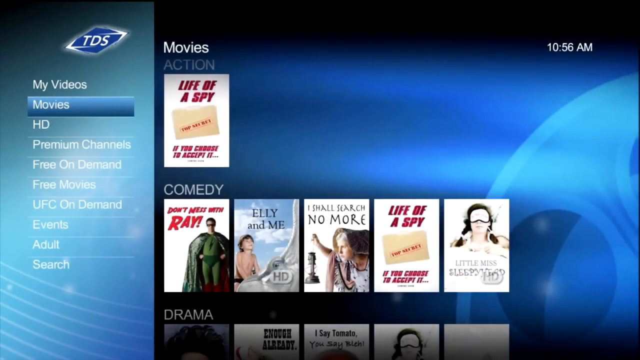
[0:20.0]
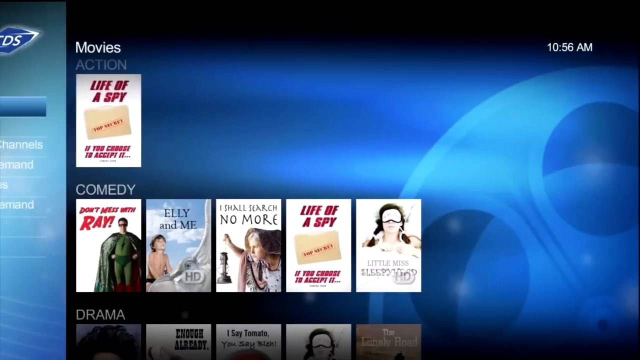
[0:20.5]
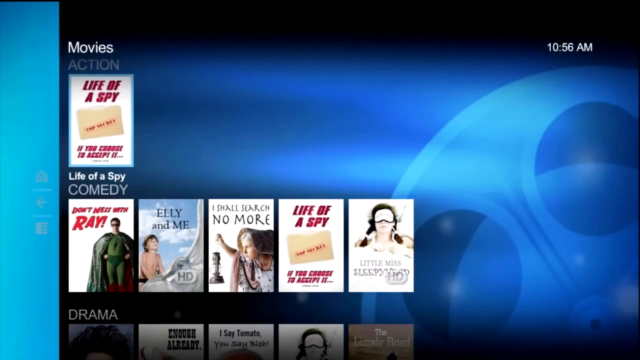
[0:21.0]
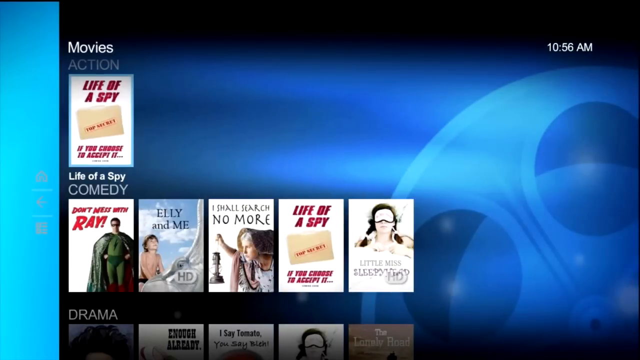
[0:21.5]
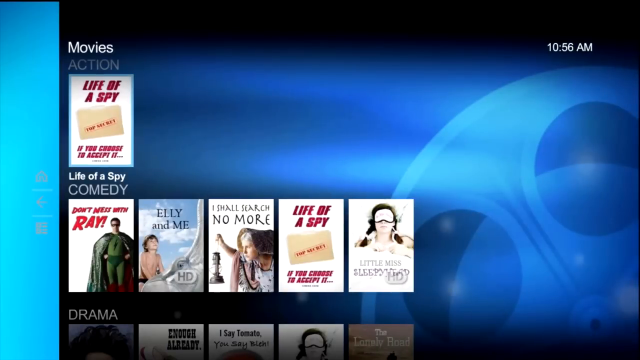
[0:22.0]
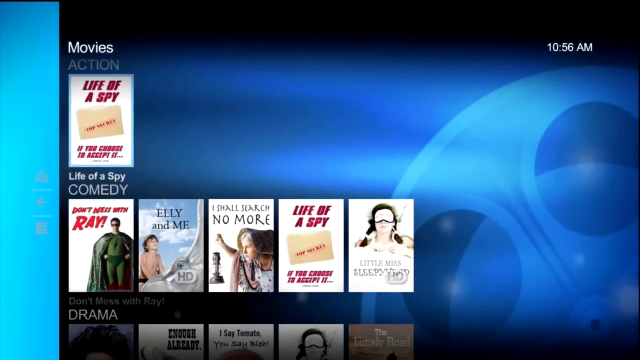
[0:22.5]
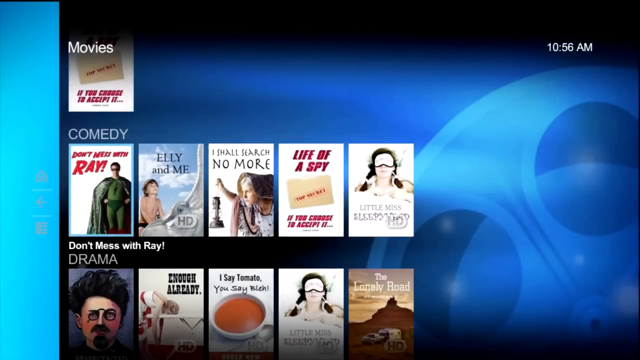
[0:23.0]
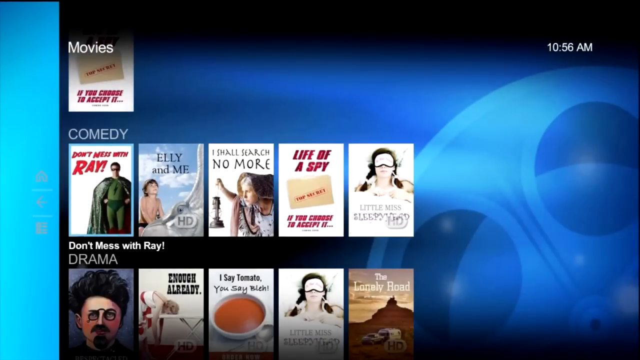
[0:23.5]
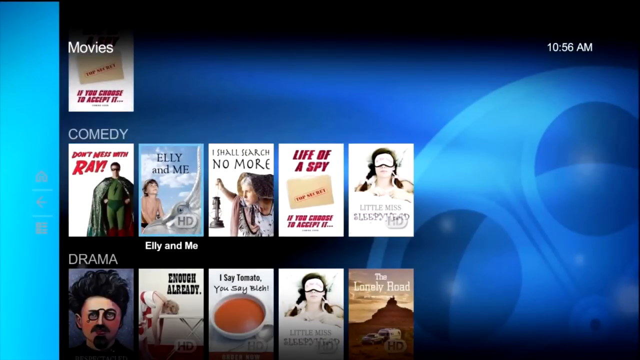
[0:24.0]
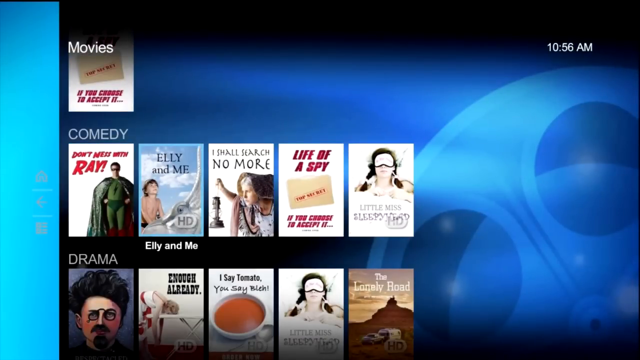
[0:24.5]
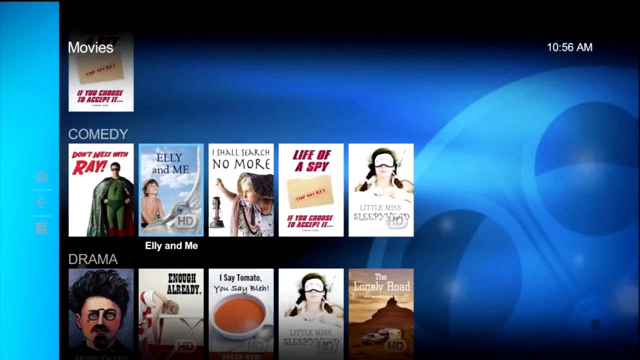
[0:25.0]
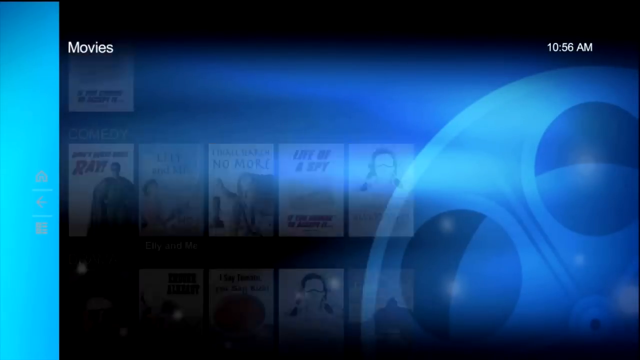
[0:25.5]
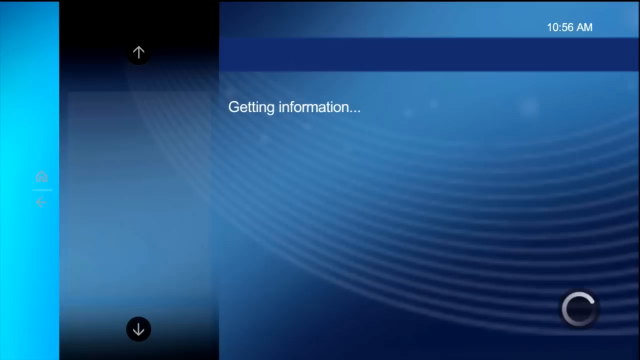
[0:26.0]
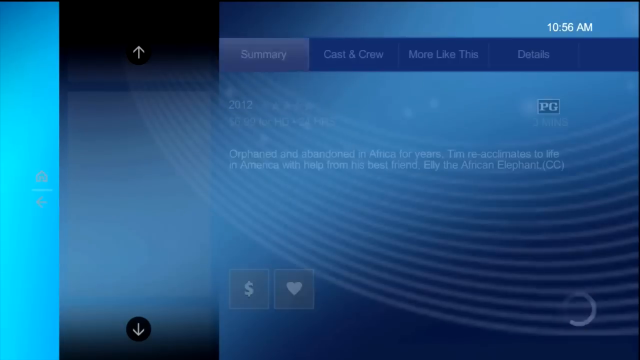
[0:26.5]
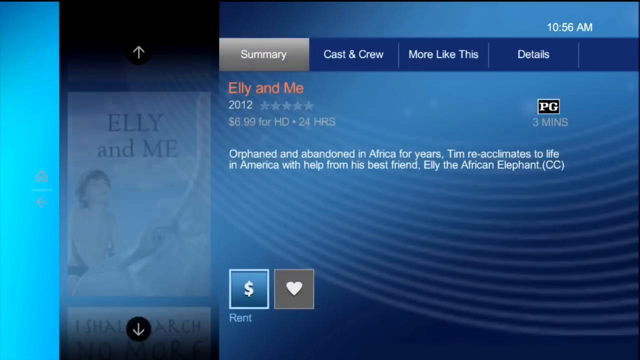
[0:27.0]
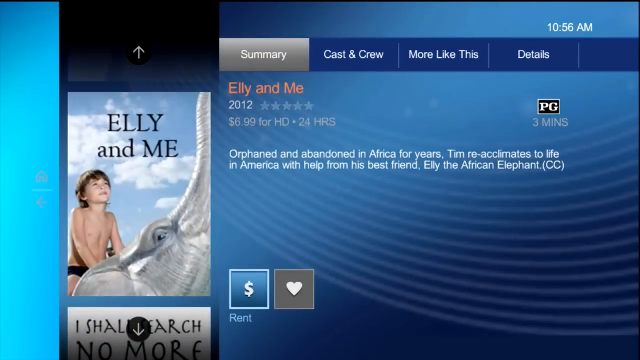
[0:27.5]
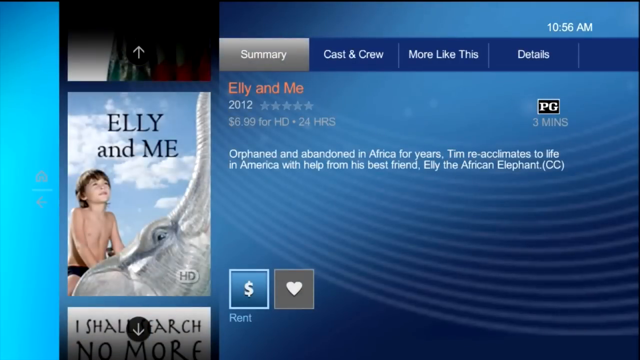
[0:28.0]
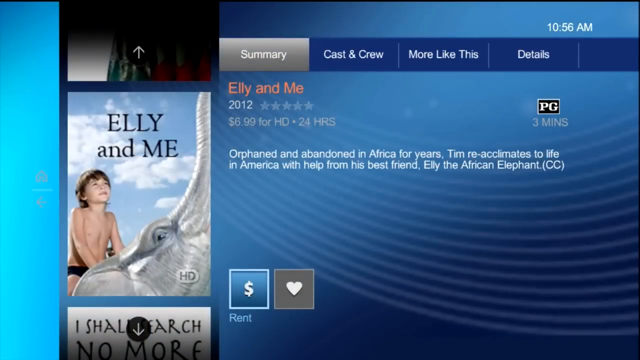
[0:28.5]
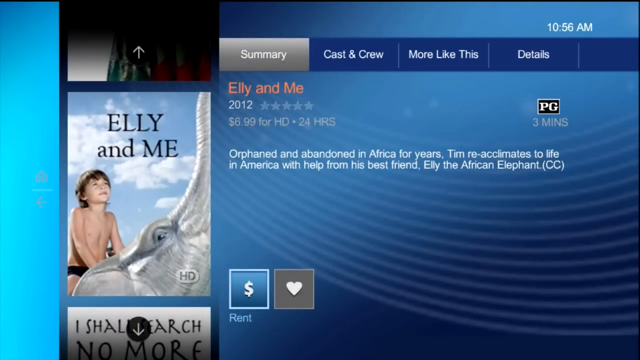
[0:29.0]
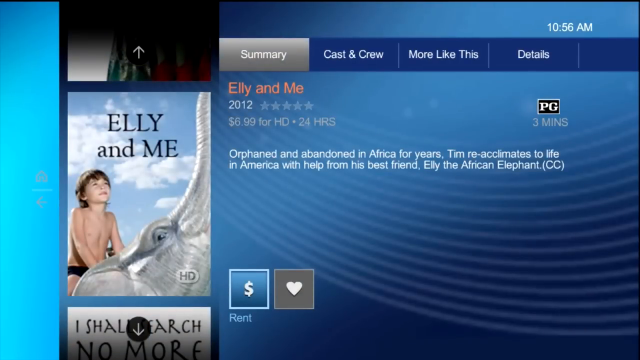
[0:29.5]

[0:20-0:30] The same movie streaming application is on screen. On the left-hand side, in a vertical box, are the categories "my videos", "movies", "HD", "premium channels", "free on demand", "free movies", "UFC on demand", "events", "adult" and "search", with the movies category highlighted by a blue rectangle. On the right-hand side, at the top middle, is the word "movies". Below it is the subcategory "action" with one movie listed, Life of a Spy, and beneath that are five comedy movies and five drama movies. The user moves to the right, and the categories in the left box disappear. They drop down into the comedy section and select the second option, ELLY and Me. Information then appears on the right, including the year it was made, the number of stars it received and the cost of the HD version.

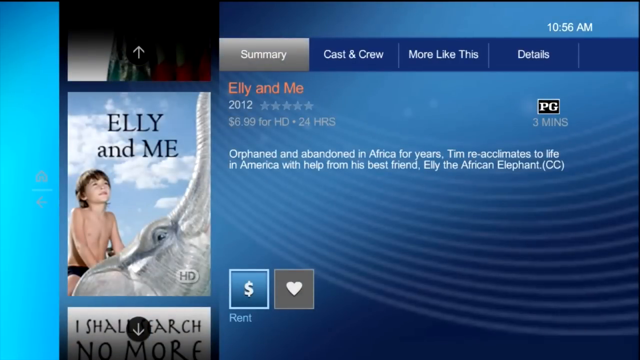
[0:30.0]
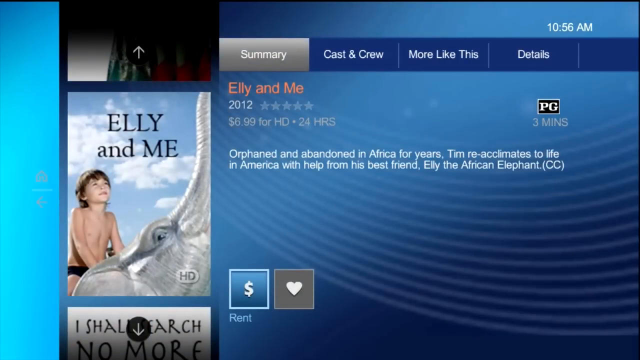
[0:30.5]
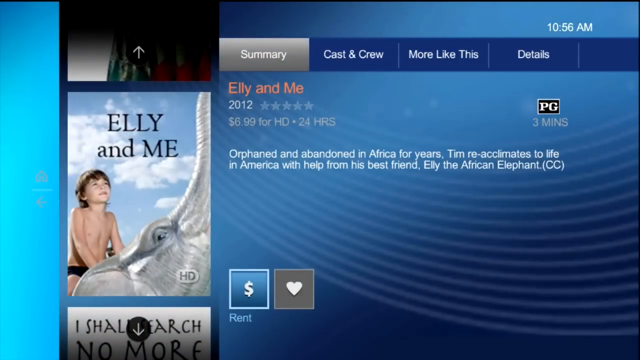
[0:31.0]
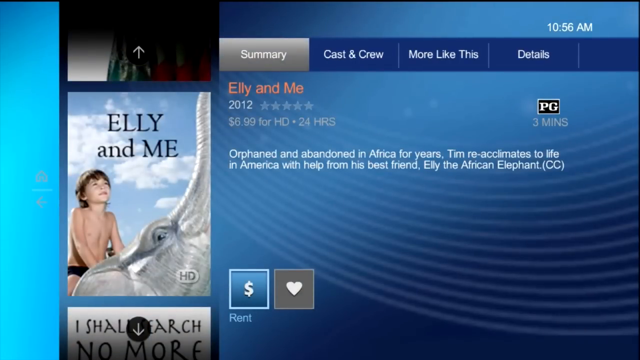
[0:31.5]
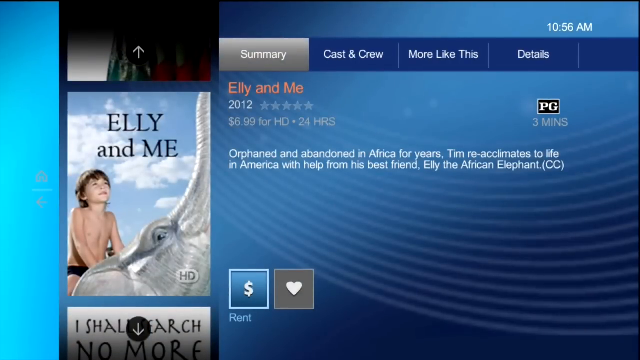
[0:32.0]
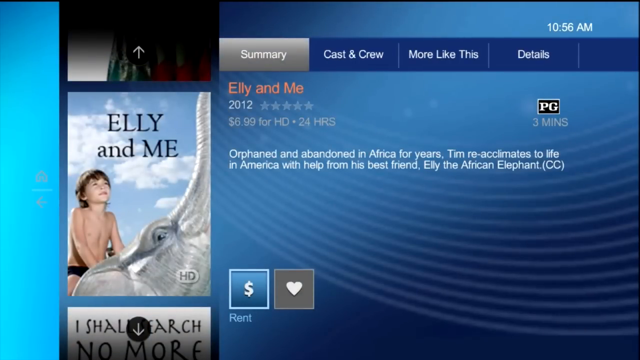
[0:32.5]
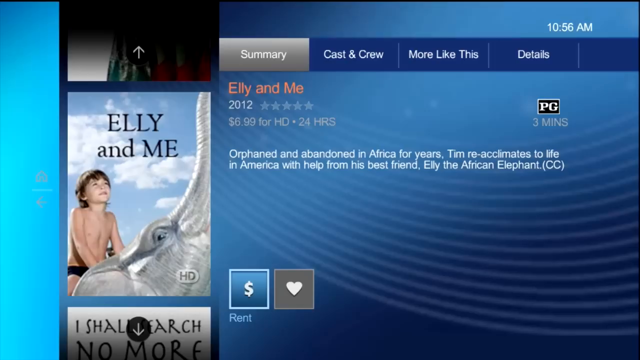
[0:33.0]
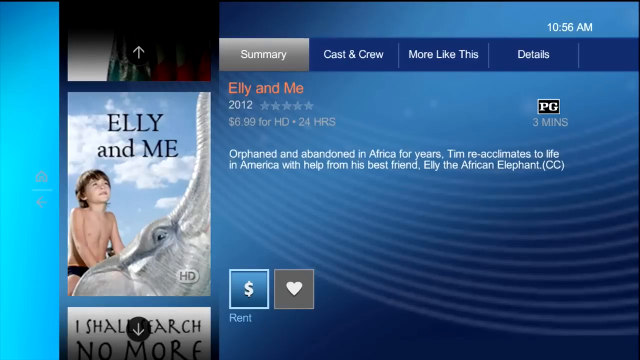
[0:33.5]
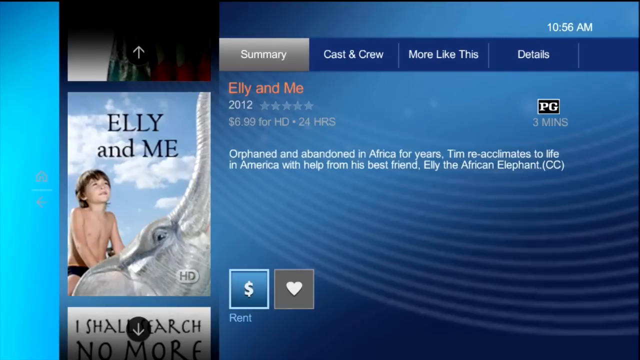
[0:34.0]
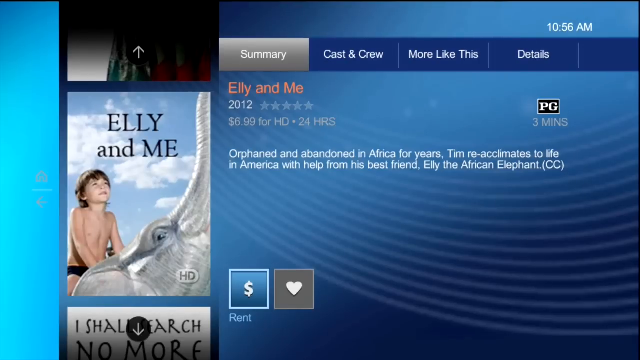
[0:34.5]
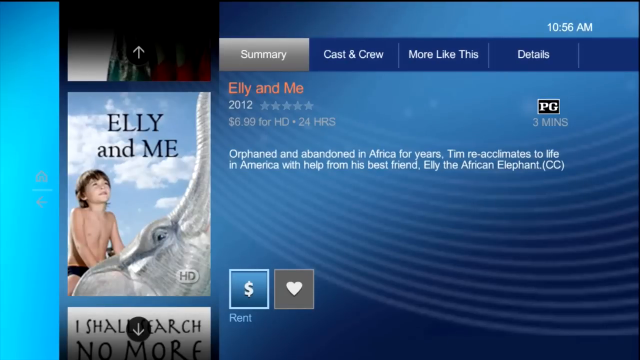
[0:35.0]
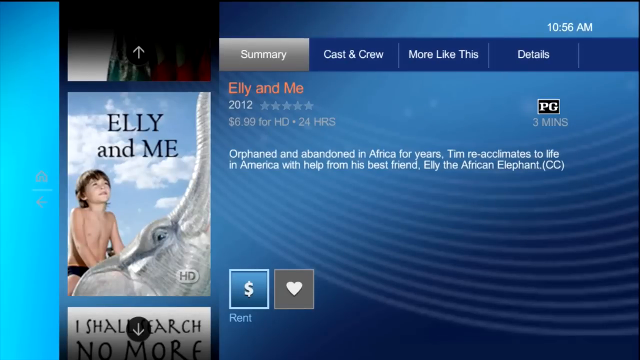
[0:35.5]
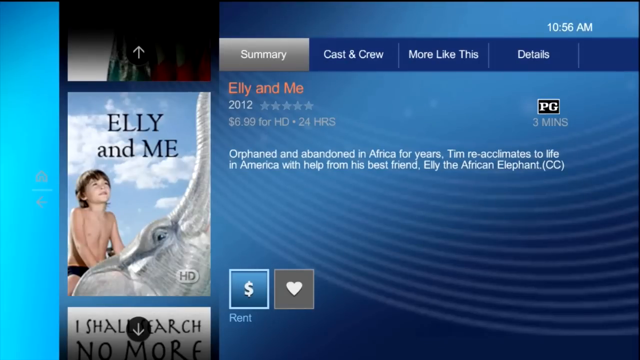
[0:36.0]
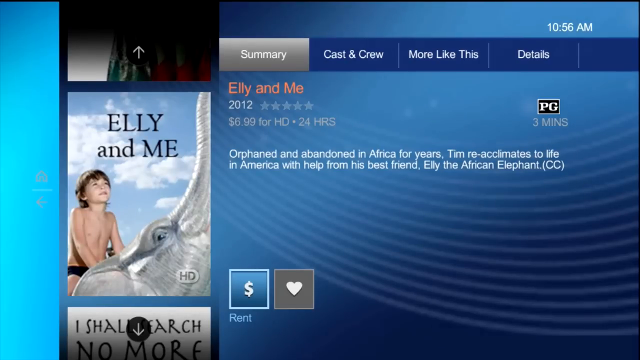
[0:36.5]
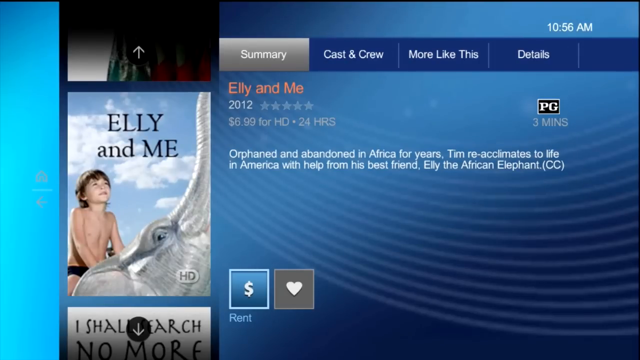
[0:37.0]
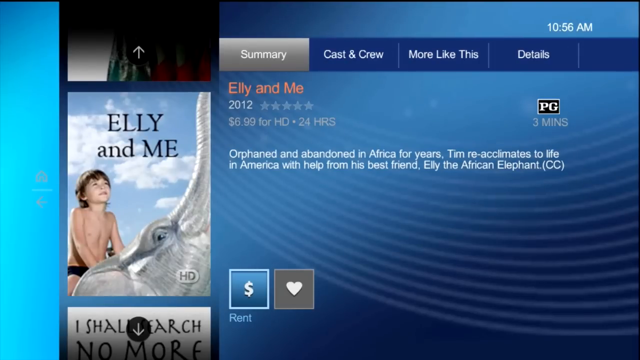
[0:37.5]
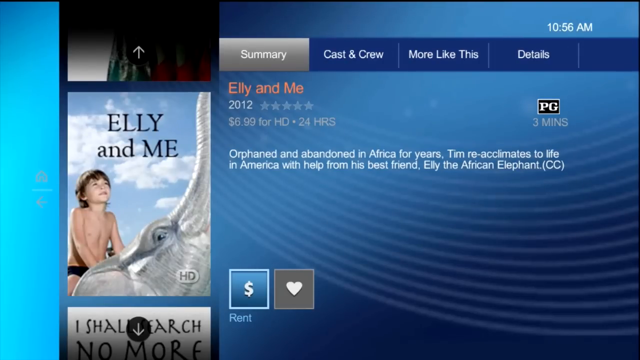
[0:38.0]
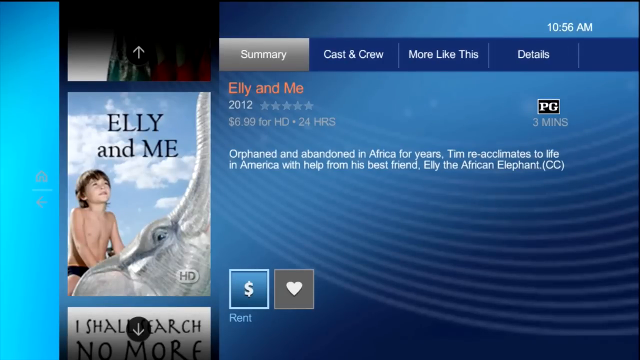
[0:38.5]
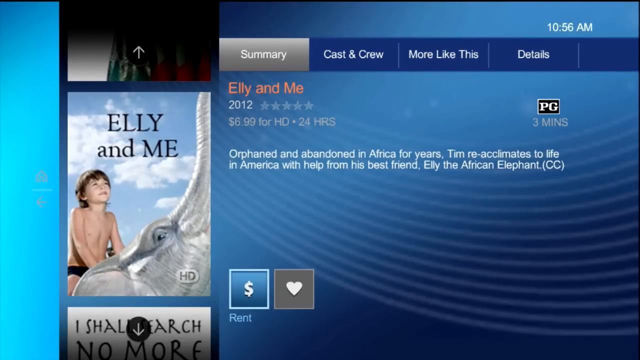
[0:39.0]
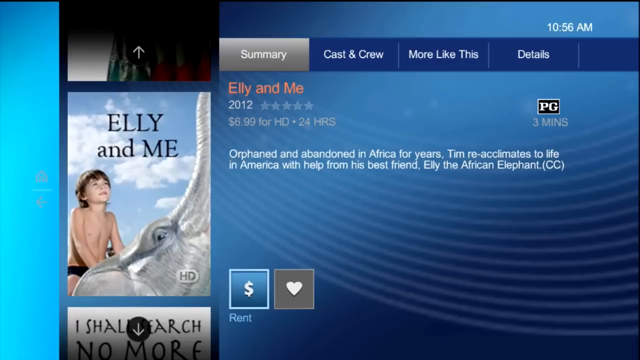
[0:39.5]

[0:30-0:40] The same section is shown against a very bluish background, with the movie ELLY and Me selected. Its name appears in orange in the upper middle portion of the screen. Beneath the title is the date, 2012, and to the right of the date is the star rating, which is currently blank. Below that is the price: "$6.99 for HD, 24 hours". Above all of this, at the top middle, are several options for the movie: "summary", "casting crew", "more like this" and "details". The movie image appears on the left, showing a young boy riding what appears to be an elephant. The view stays on this movie for a while. Some arrows are above the ELLY and Me title, and at the bottom of the screen is a money symbol with "rent" written underneath it.